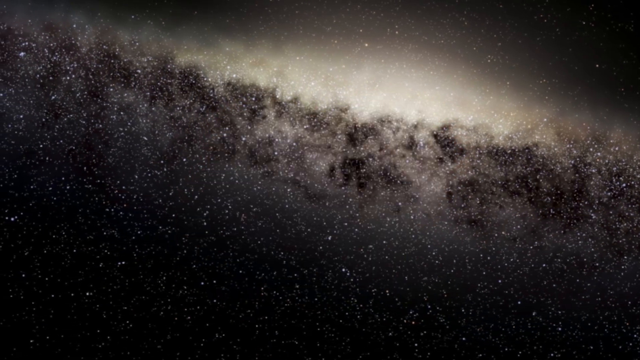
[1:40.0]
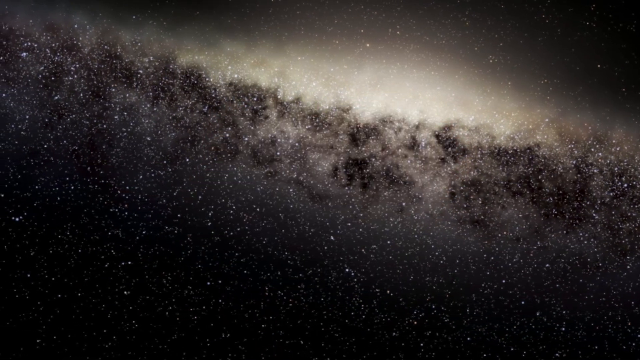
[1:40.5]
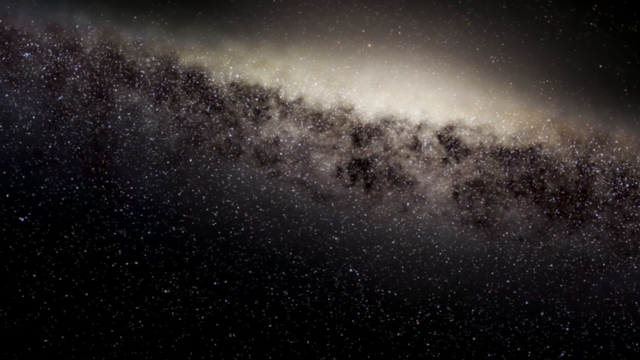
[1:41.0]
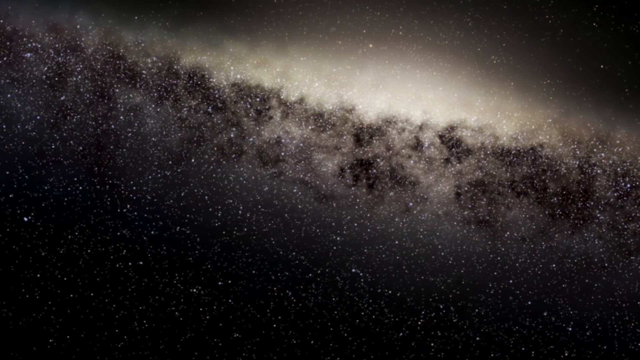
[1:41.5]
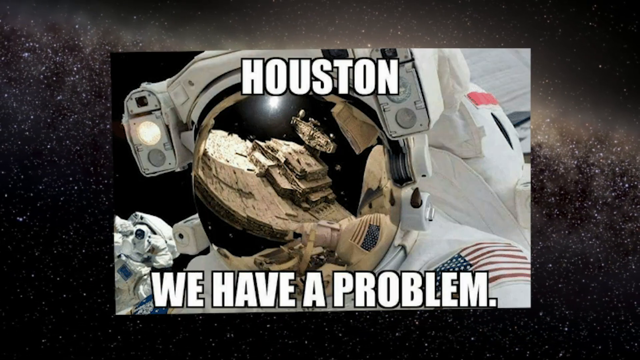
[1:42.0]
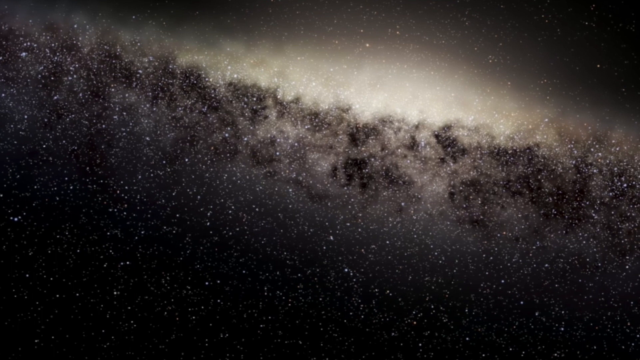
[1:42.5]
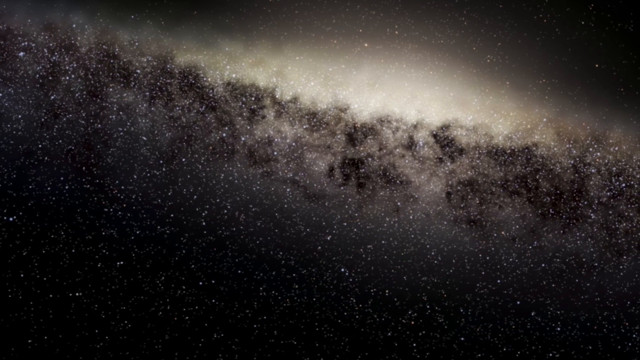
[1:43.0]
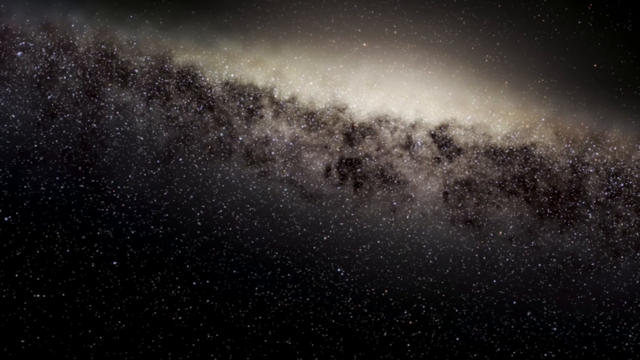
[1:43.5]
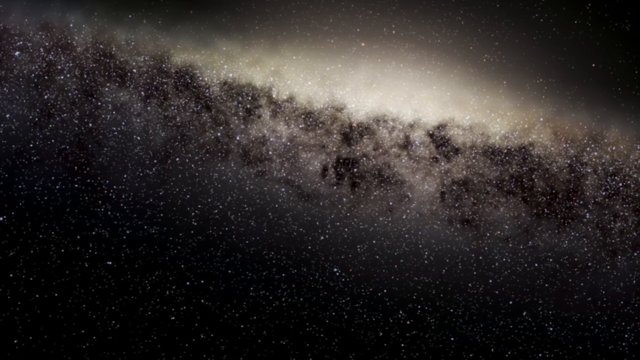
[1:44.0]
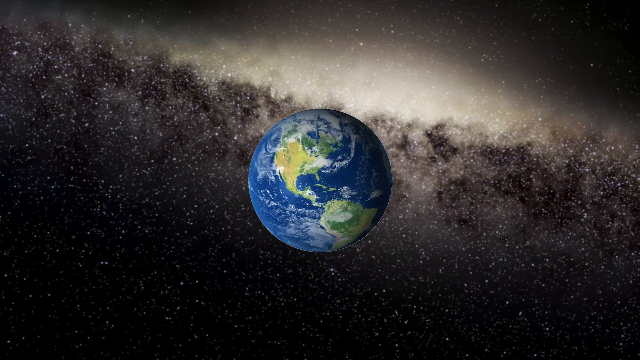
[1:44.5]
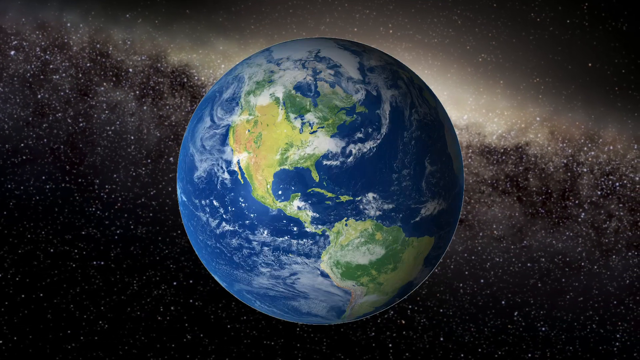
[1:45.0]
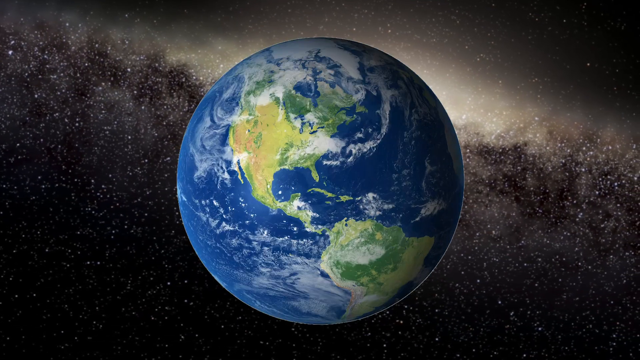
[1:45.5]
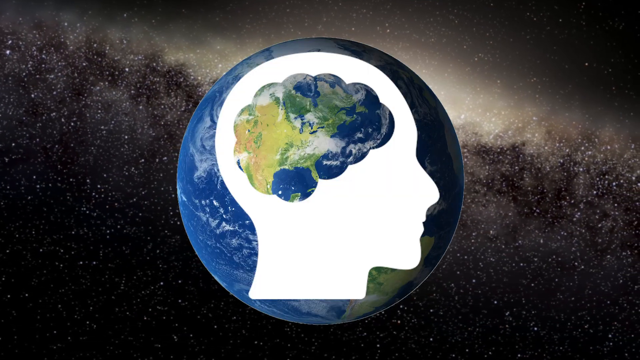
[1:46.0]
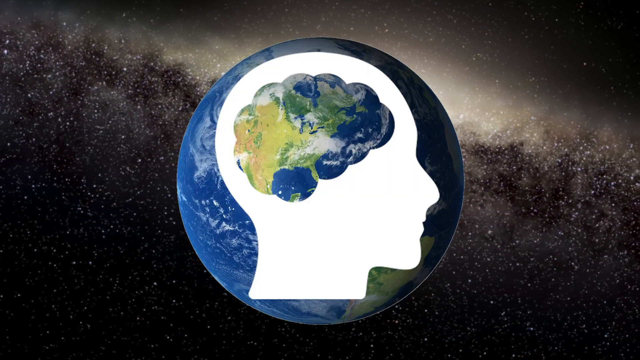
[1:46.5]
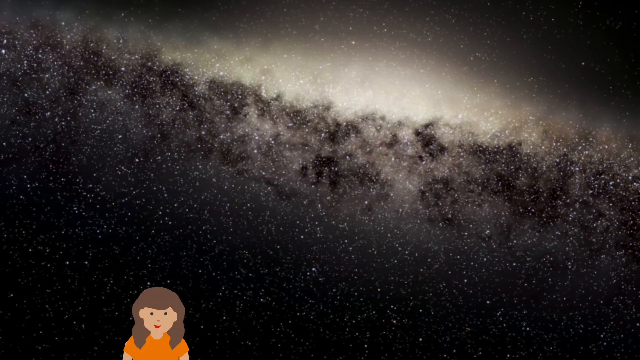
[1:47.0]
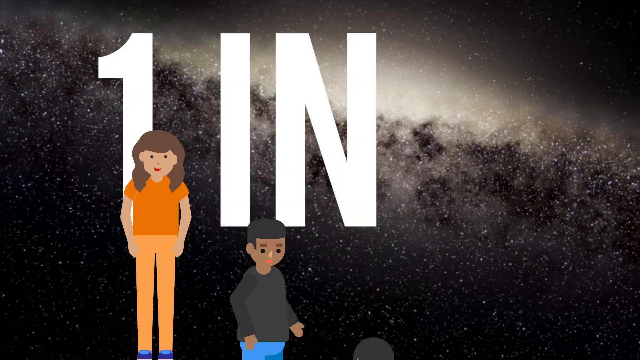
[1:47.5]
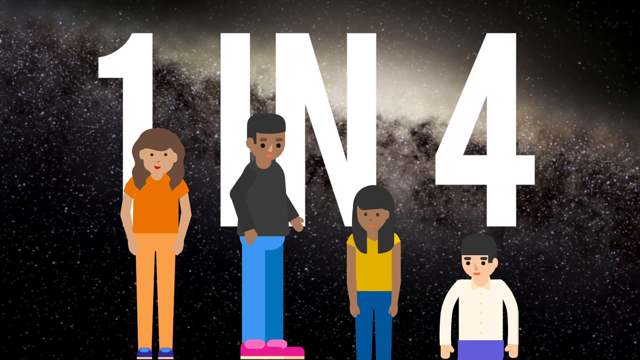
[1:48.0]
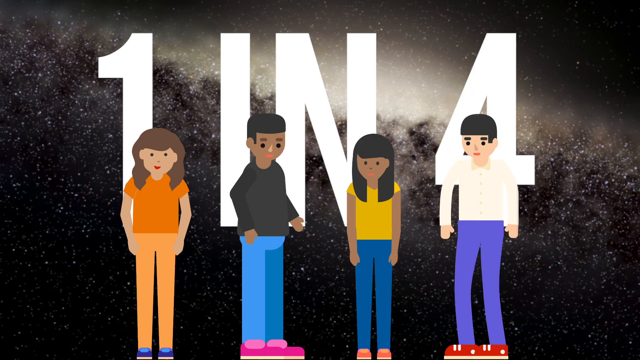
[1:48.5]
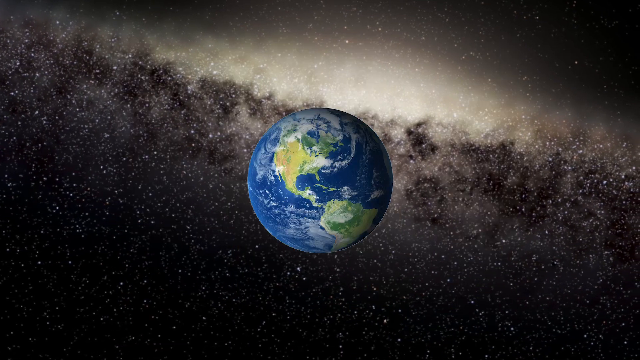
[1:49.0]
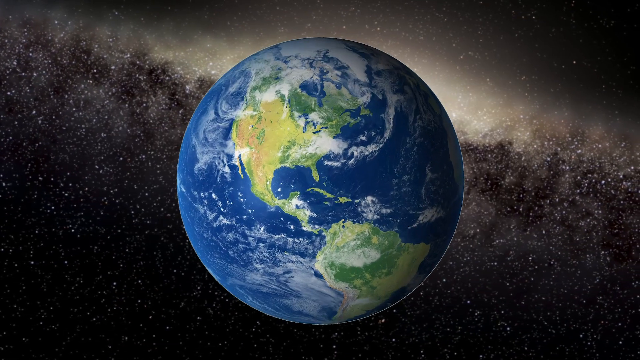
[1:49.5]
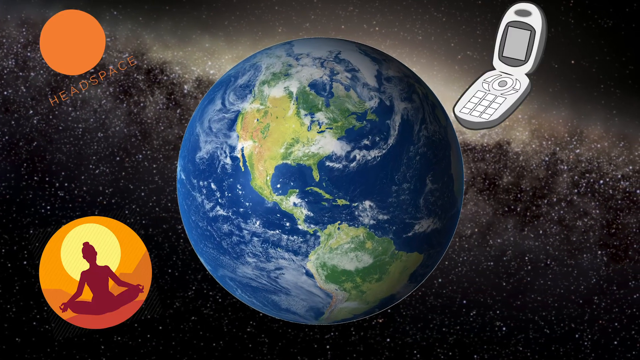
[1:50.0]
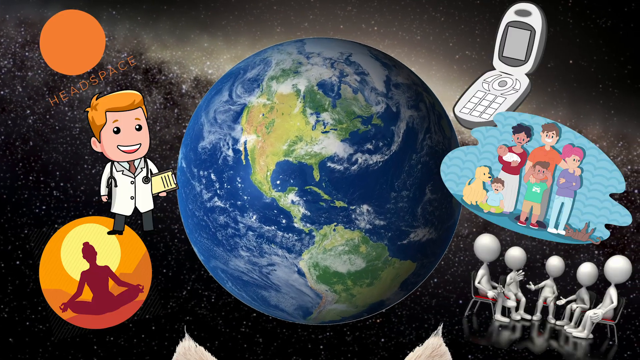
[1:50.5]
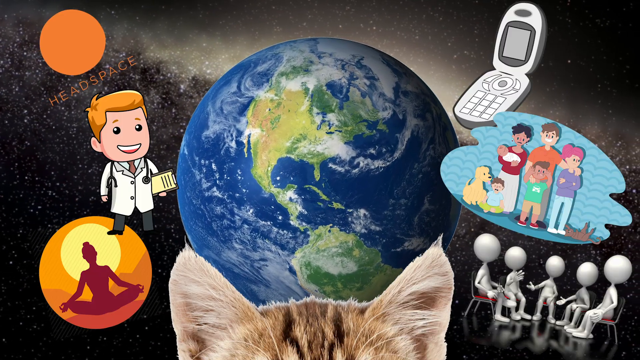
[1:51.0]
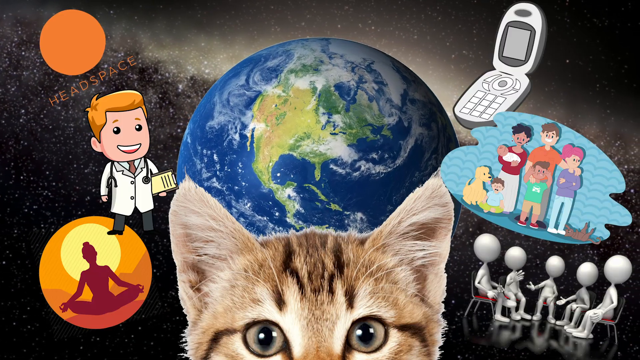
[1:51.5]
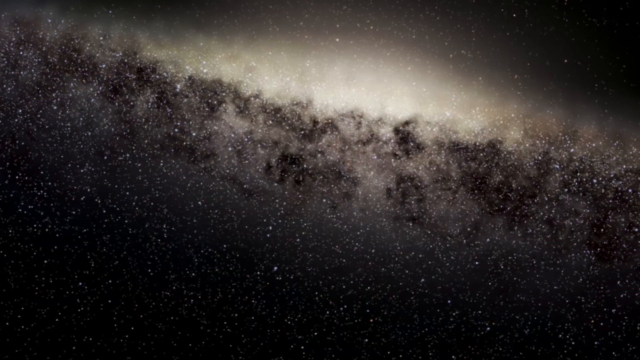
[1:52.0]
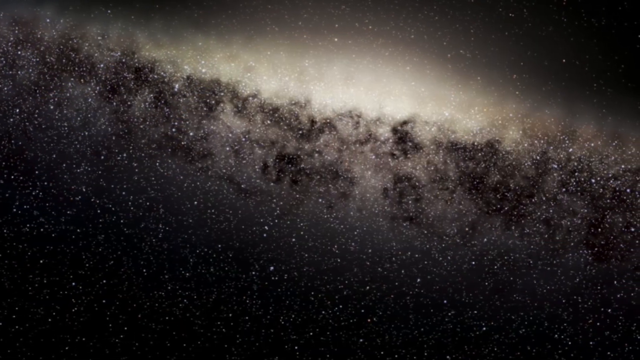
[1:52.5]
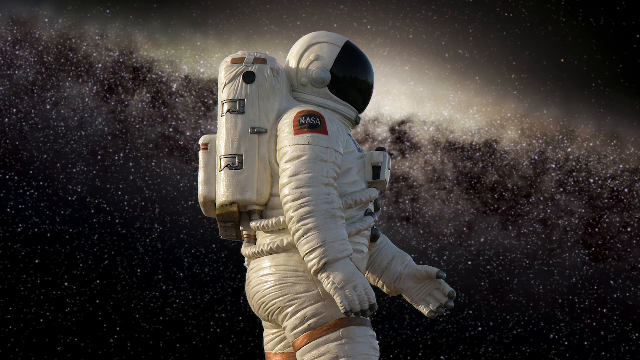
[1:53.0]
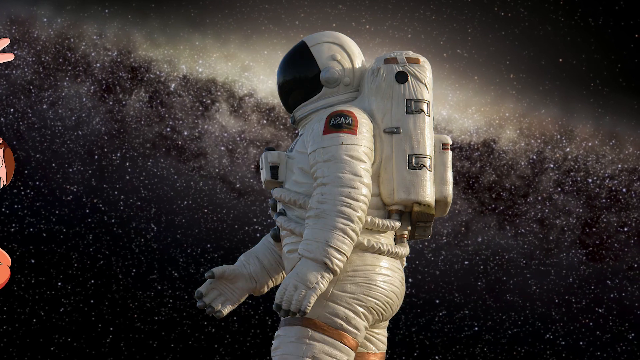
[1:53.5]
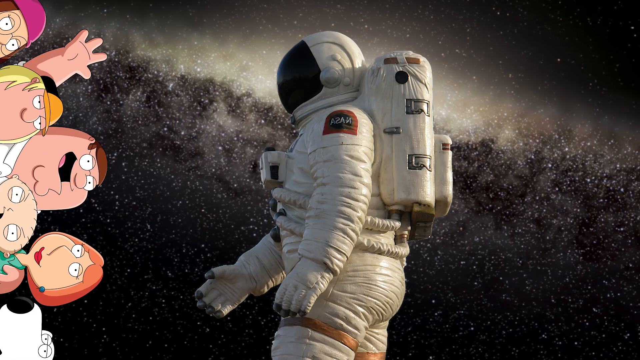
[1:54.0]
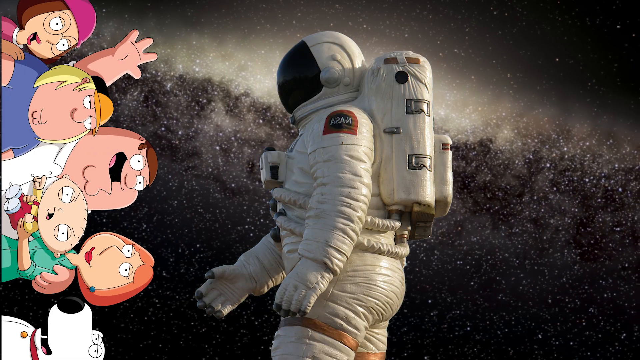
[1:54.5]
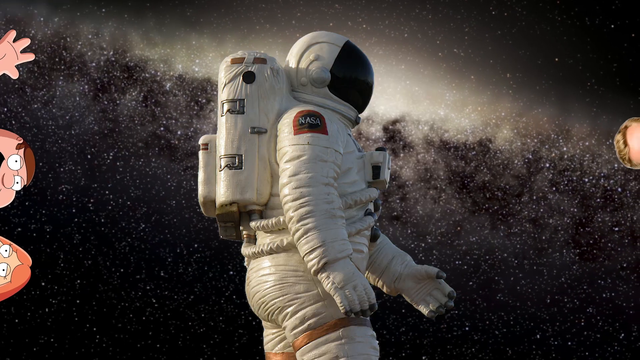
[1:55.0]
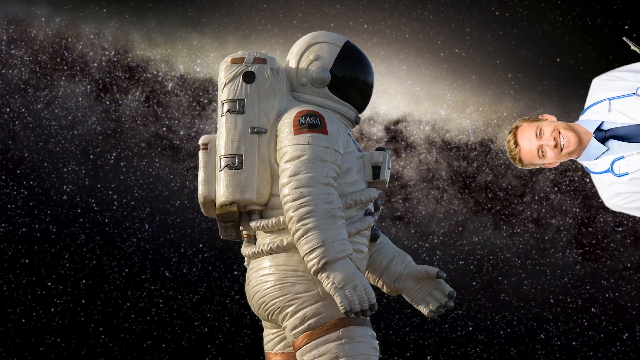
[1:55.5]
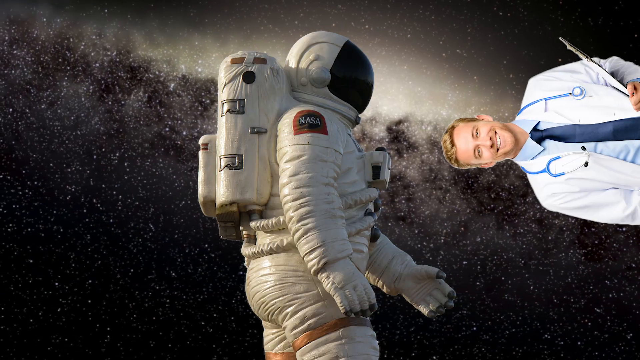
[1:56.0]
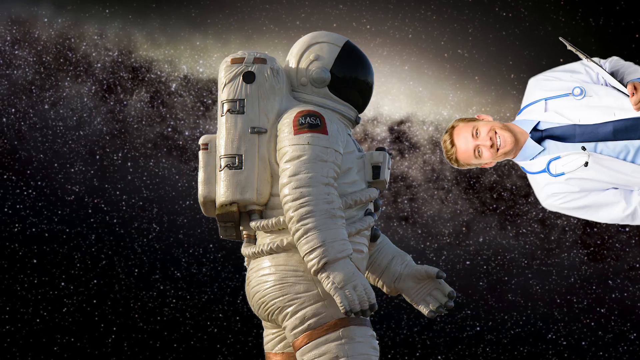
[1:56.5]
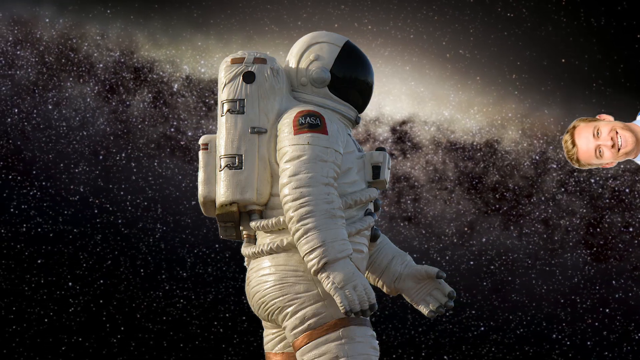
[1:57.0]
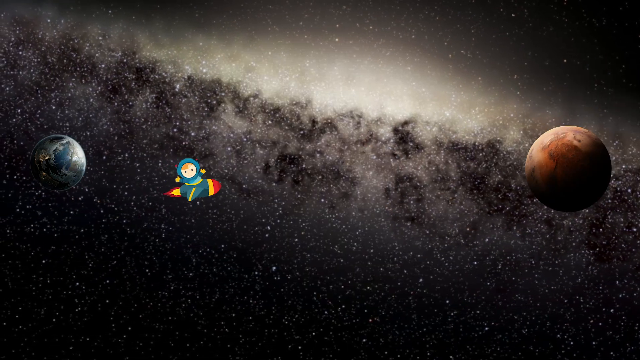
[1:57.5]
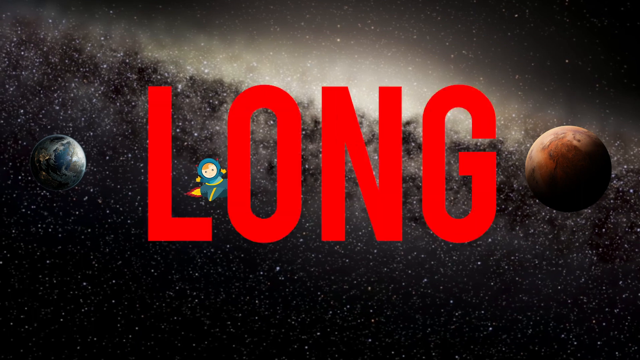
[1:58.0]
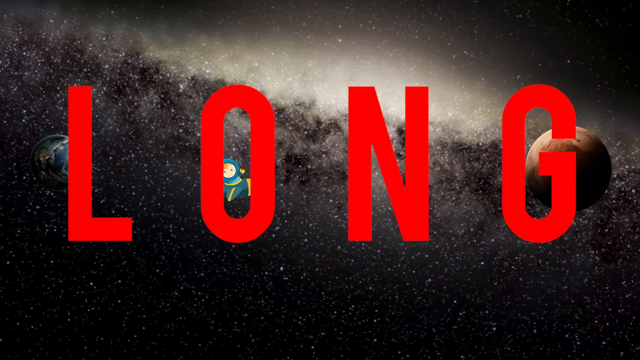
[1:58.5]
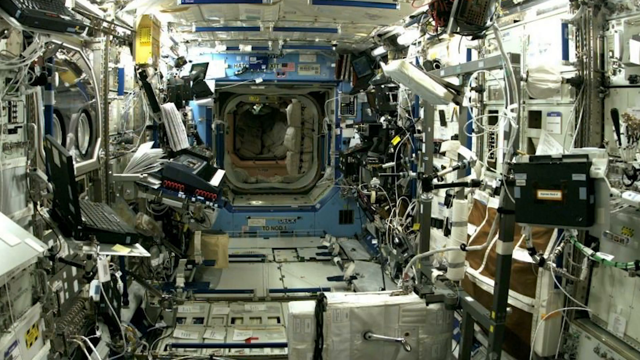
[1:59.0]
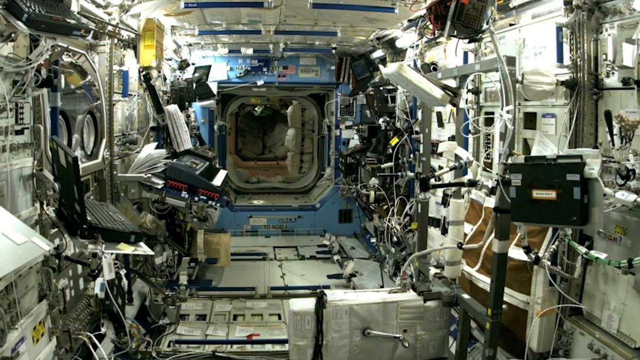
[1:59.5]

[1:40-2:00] A picture of outer space appears, followed by a meme picture of an astronaut that disappears very quickly. The Earth appears in the middle, and then a human head figure whose brain looks like the Earth. Four people appear from the bottom, with large captions behind them reading "one in four". The Earth then appears very large in the middle with many images on either side: on the left, the sun, a doctor, and someone doing yoga or meditation; on the right, a flip phone, a family, and 3D stick figures sitting together. At the bottom, a cat comes up from below and looks at the viewer, with the globe of the Earth in the middle.